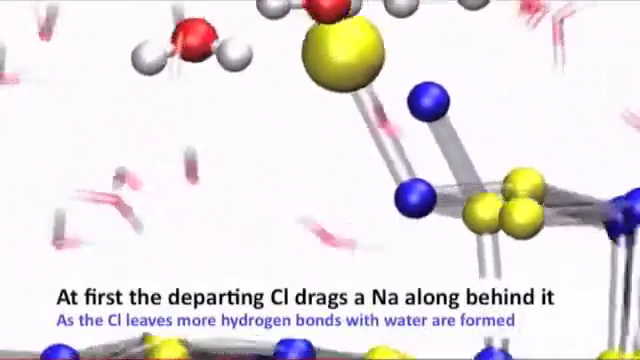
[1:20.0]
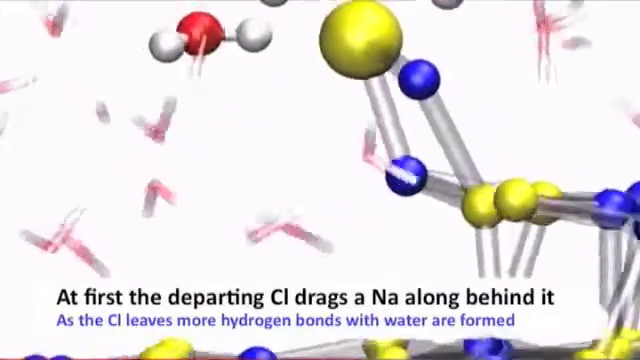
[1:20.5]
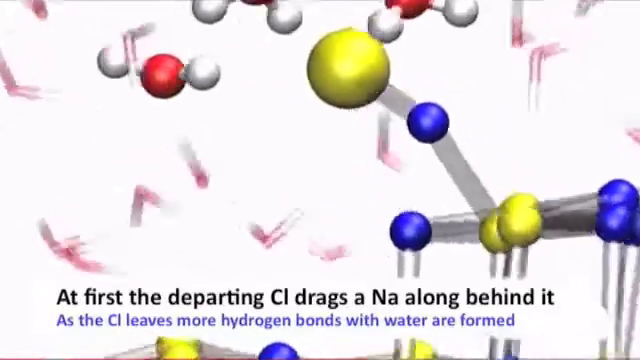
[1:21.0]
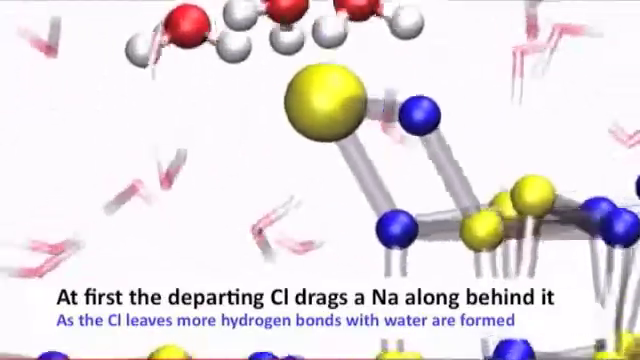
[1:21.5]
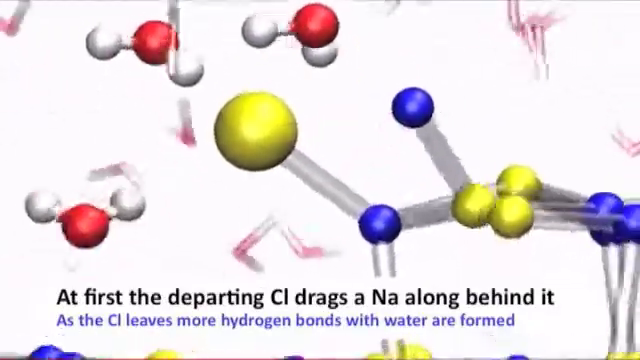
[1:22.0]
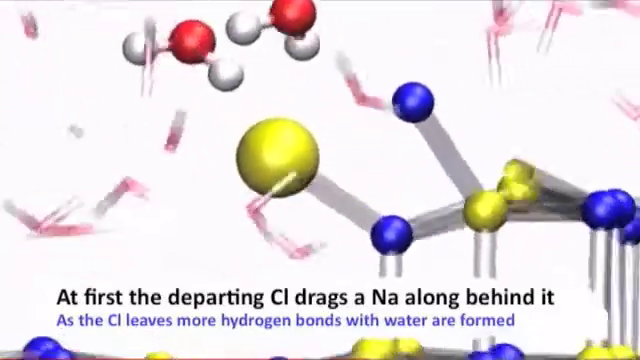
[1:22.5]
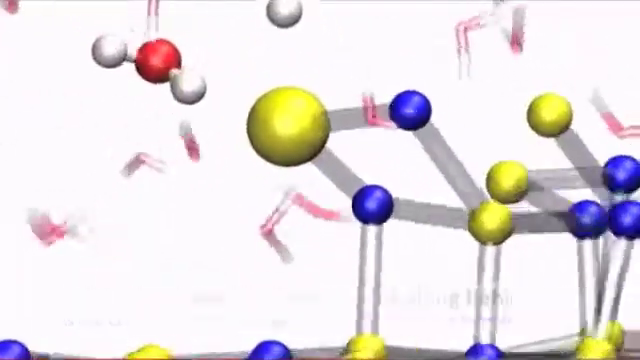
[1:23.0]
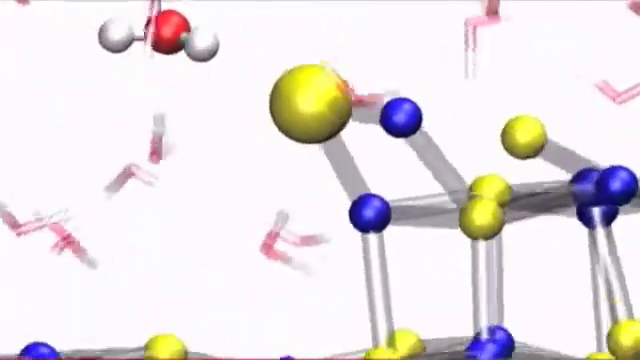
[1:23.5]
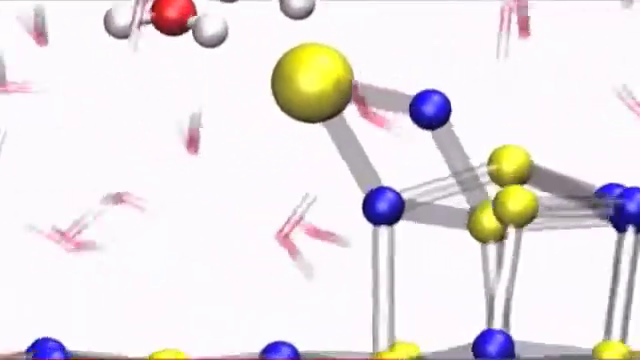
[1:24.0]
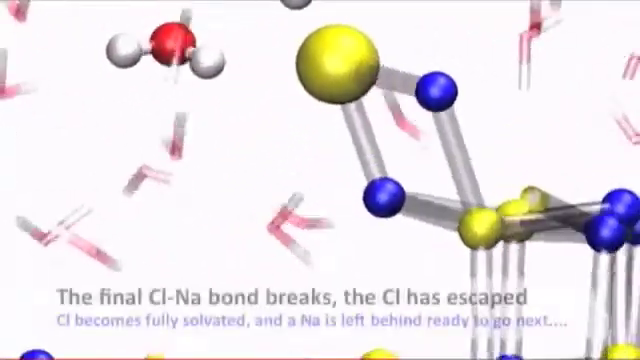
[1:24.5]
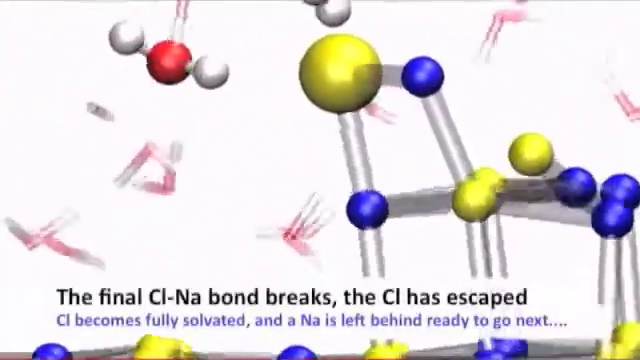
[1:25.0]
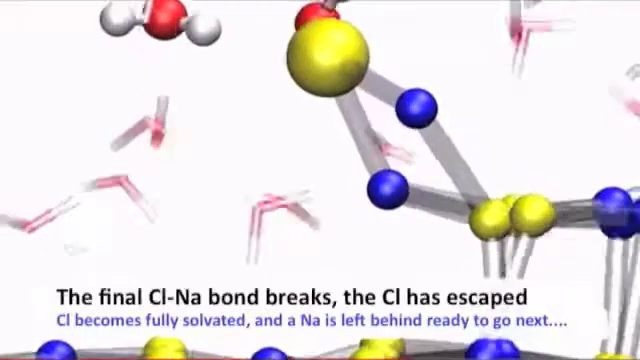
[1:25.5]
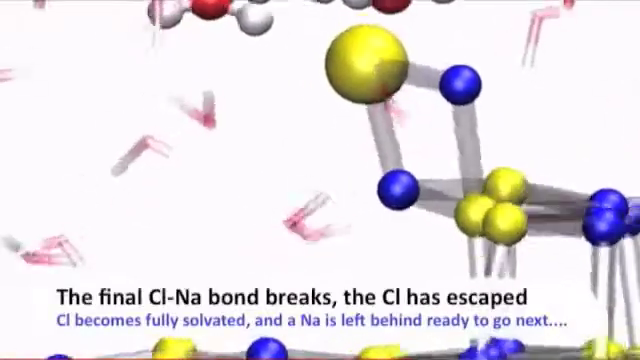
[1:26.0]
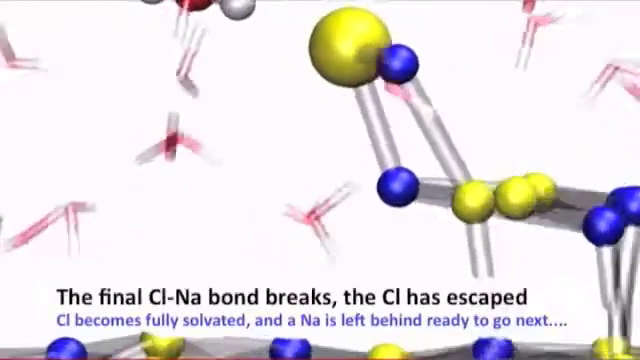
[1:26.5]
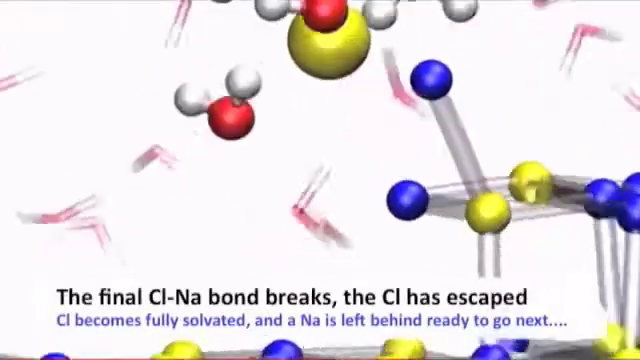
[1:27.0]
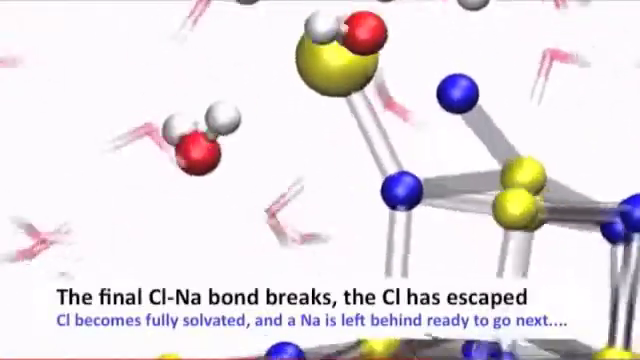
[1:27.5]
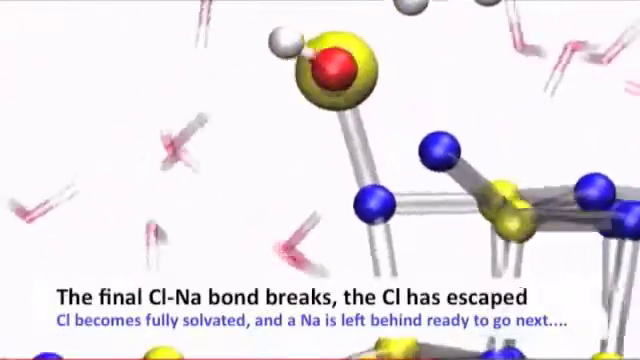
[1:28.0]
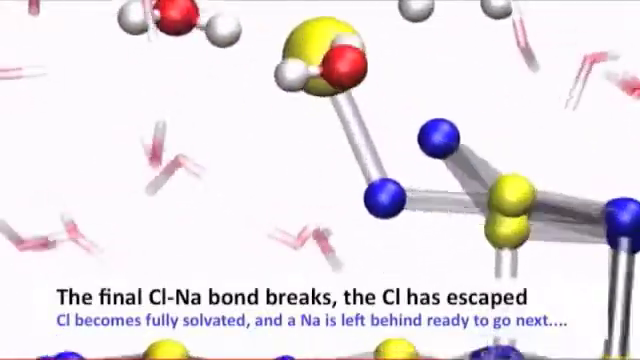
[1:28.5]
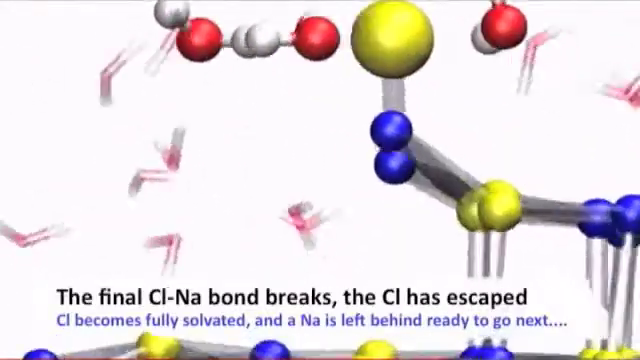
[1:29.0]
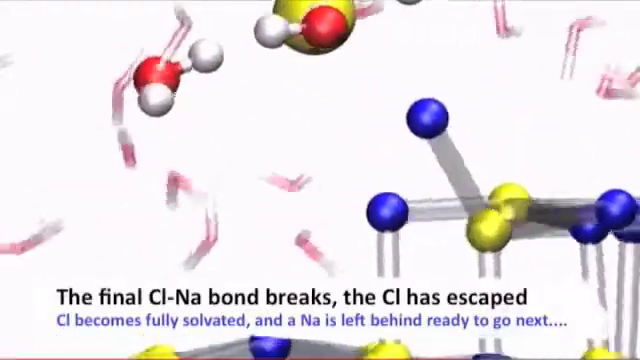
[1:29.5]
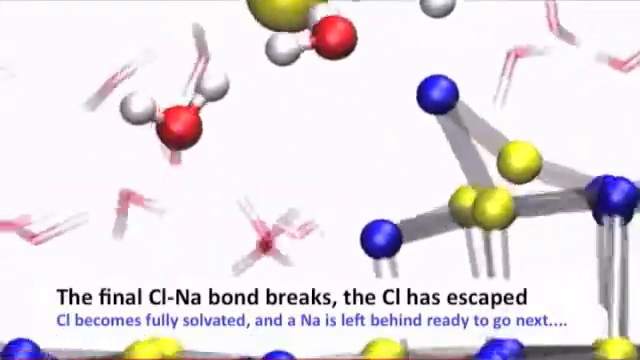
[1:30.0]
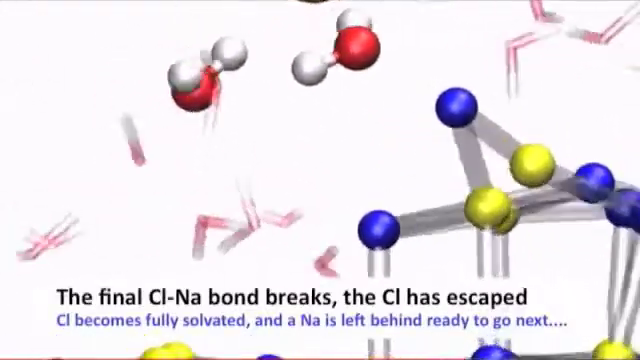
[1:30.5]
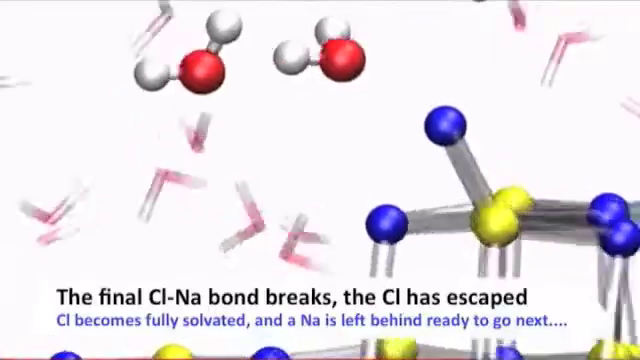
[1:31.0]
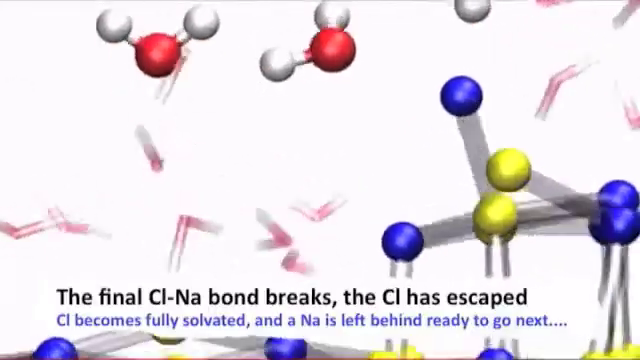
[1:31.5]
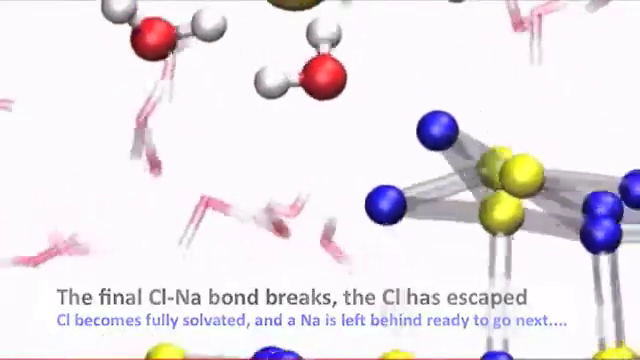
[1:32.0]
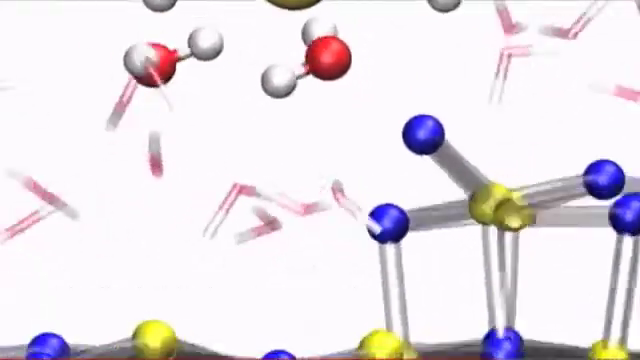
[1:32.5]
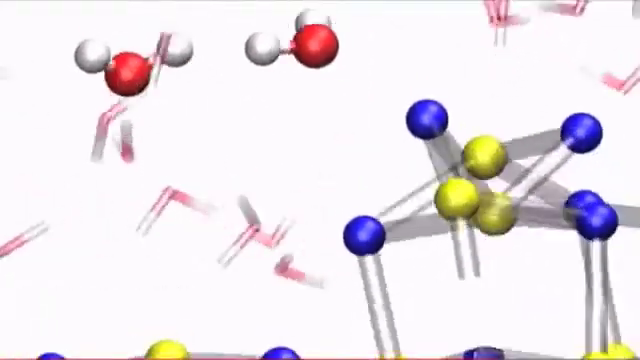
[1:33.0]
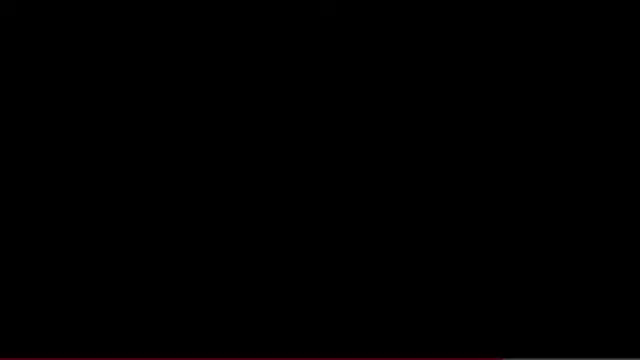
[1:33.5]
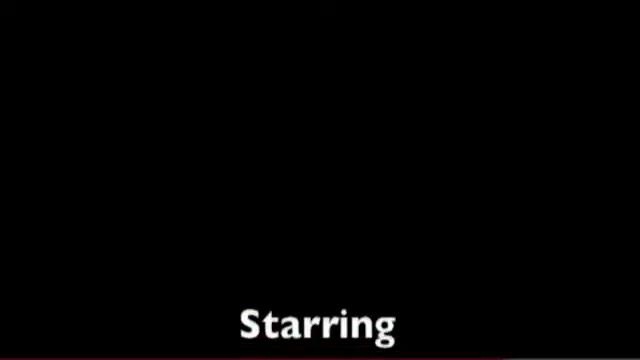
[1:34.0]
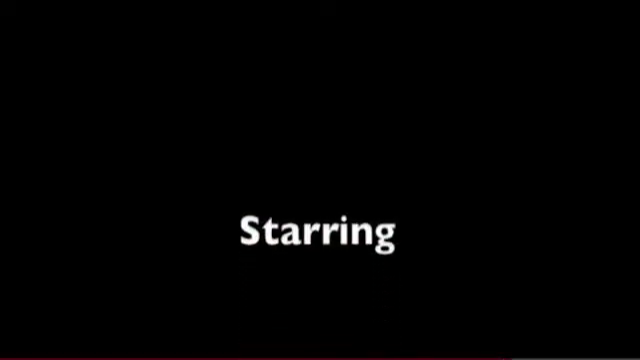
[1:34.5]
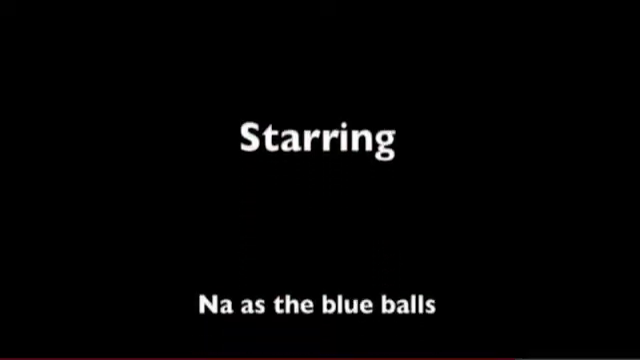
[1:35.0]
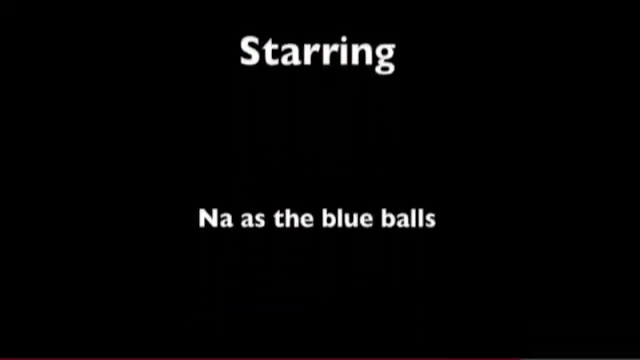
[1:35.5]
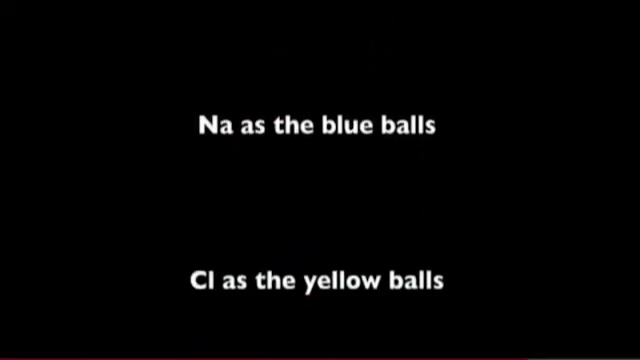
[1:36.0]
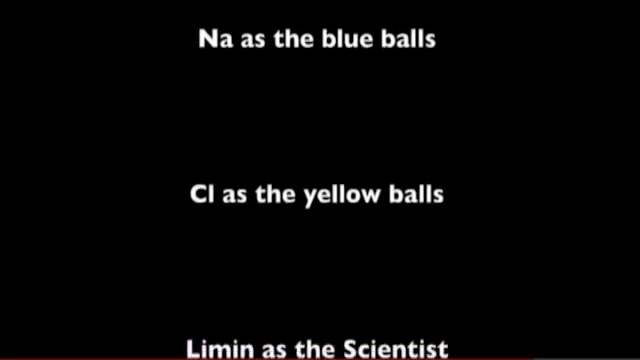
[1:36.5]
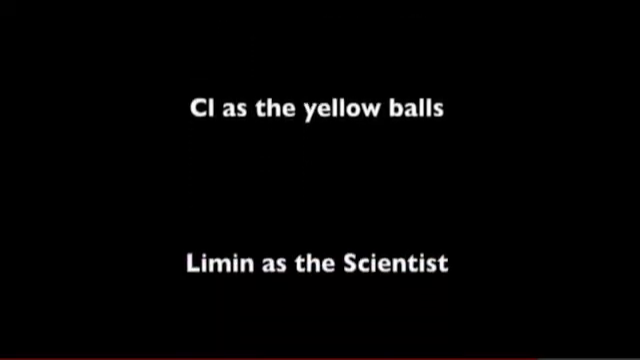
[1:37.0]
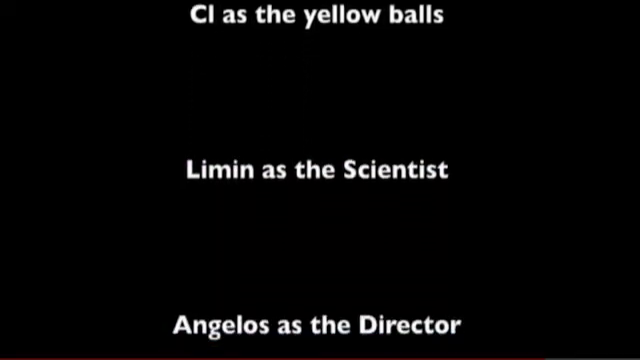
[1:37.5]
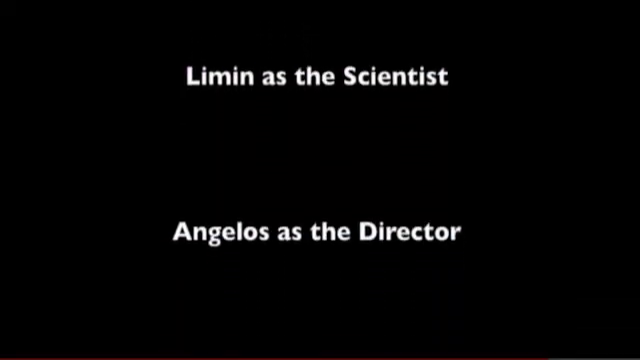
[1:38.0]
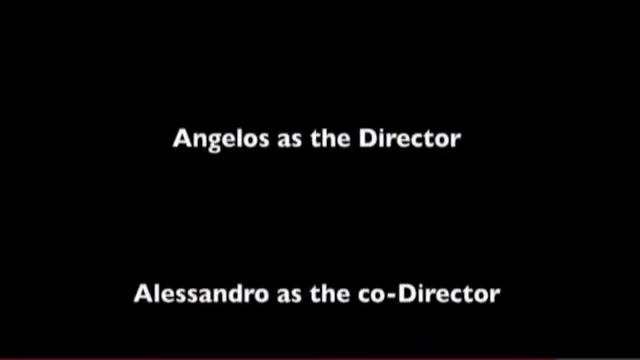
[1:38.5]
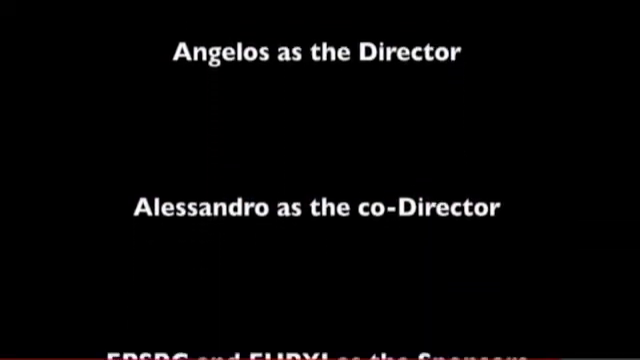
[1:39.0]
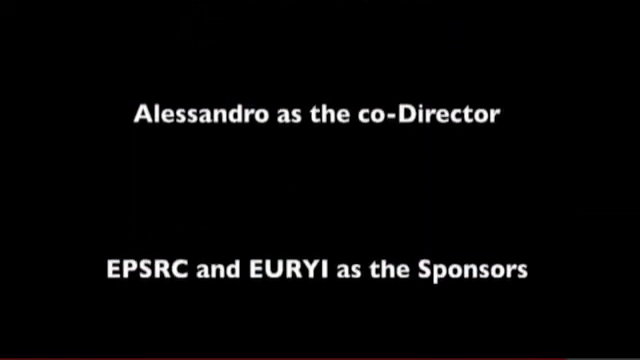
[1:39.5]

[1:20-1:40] Captions appear at the bottom of the animation: "at first, the departing CI drags an NA along behind it" and "The final CI-NA bond breaks, the CI has escaped." Atoms are identified with NA as blue balls and CI as yellow balls. Yellow and purple cells are connected by a gray tendon or strand, and red balls each have a white ball on the right and one on the left. They flutter around the entire screen with red and white V-shaped objects, all in constant motion. A black screen then scrolls, showing who put the video together.